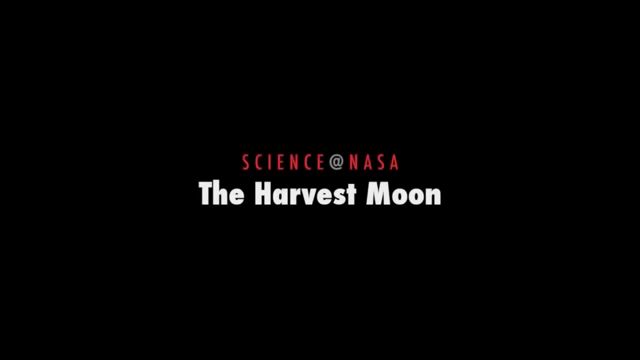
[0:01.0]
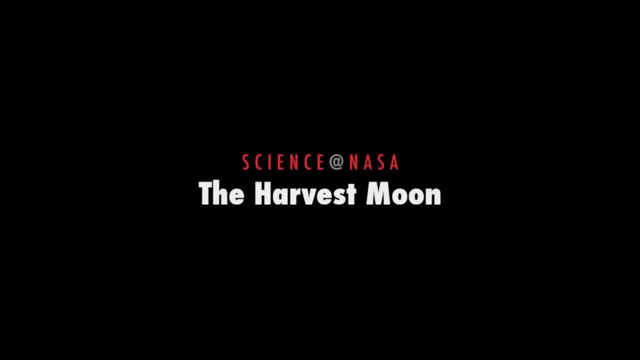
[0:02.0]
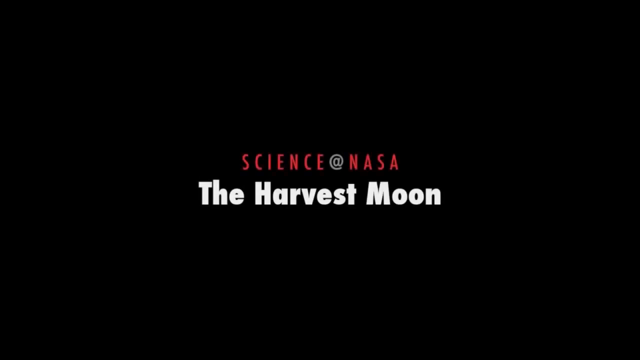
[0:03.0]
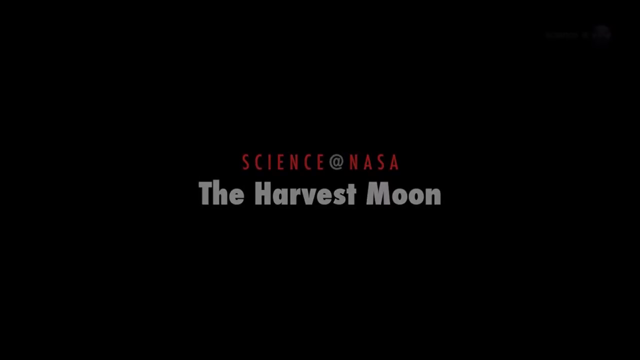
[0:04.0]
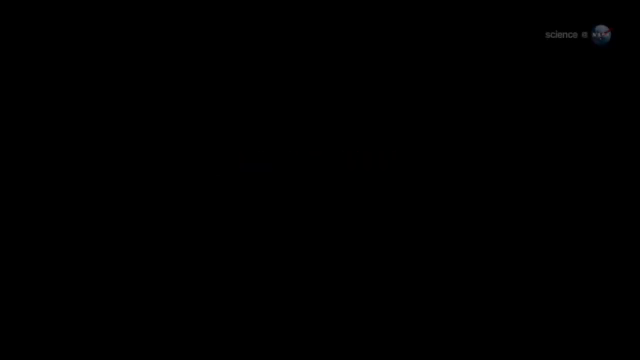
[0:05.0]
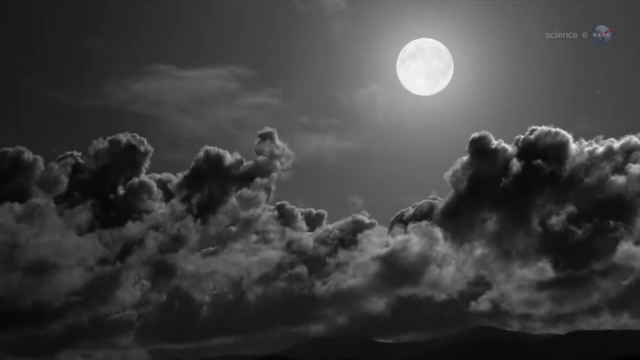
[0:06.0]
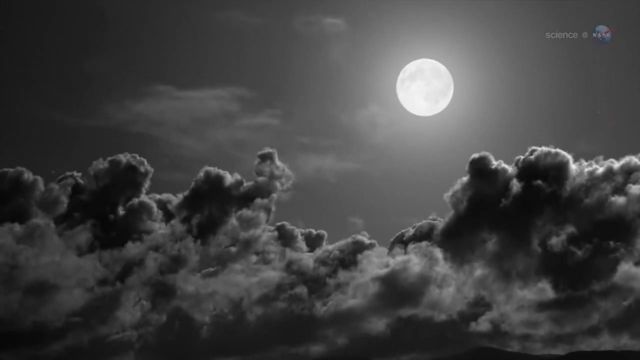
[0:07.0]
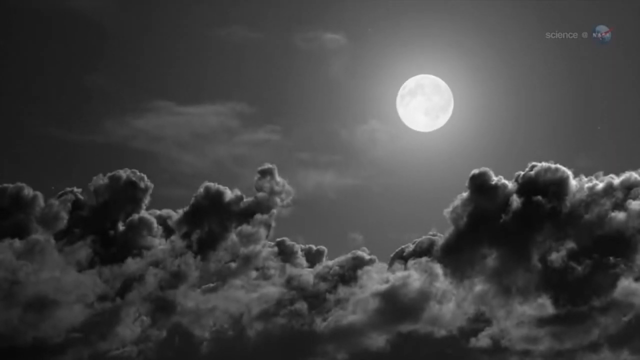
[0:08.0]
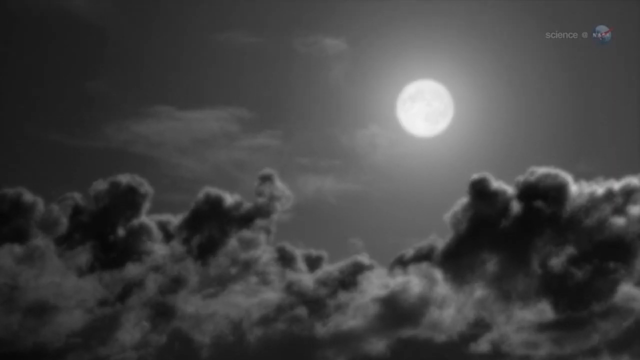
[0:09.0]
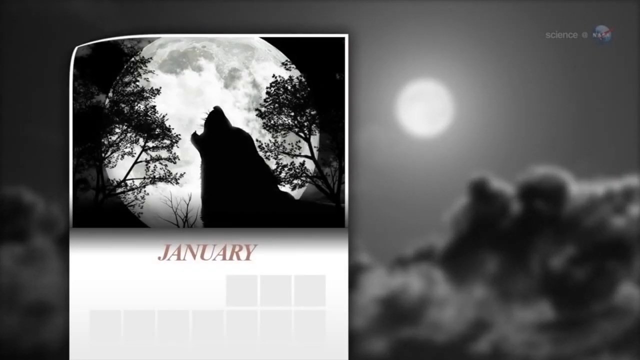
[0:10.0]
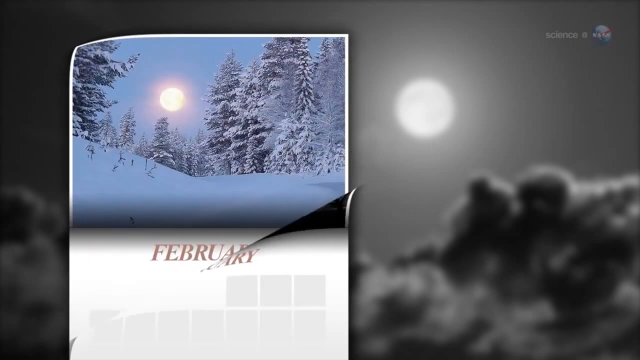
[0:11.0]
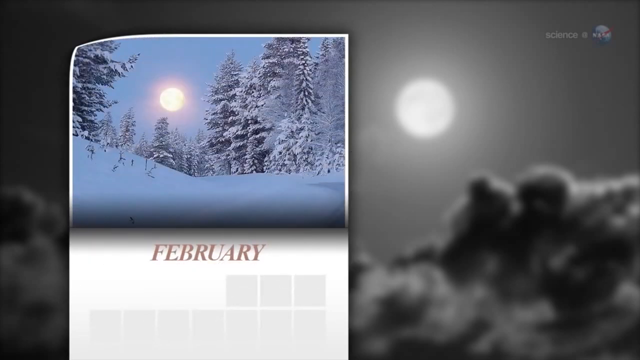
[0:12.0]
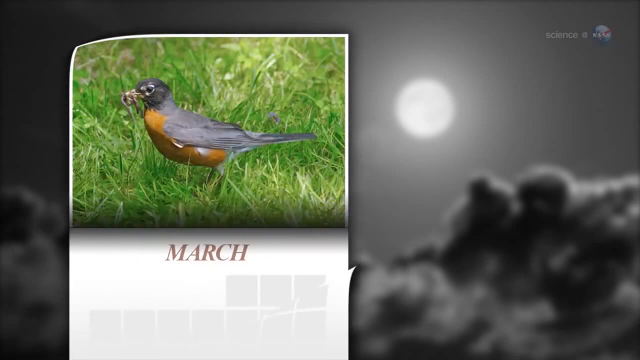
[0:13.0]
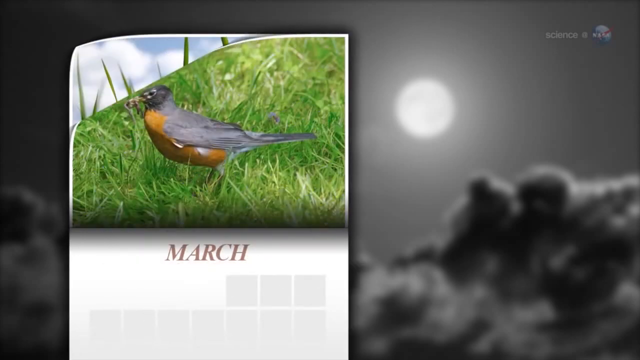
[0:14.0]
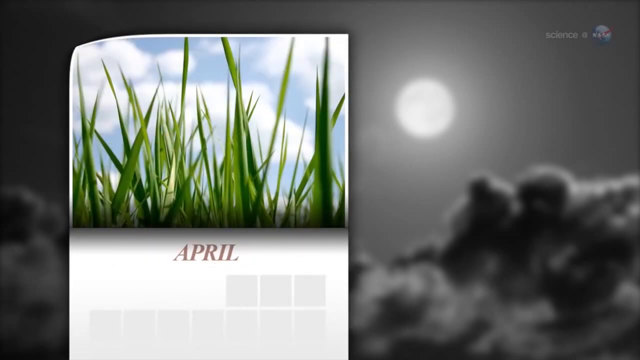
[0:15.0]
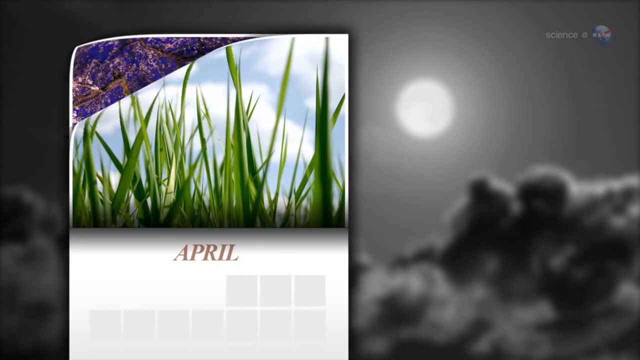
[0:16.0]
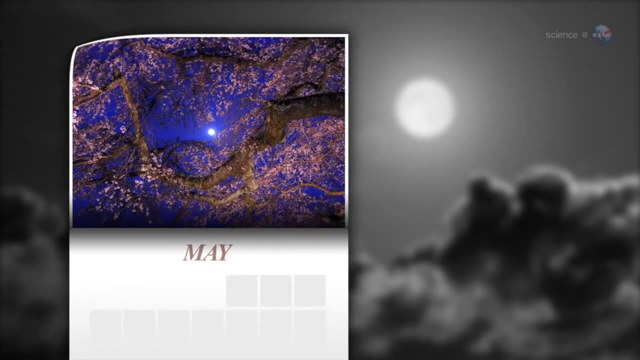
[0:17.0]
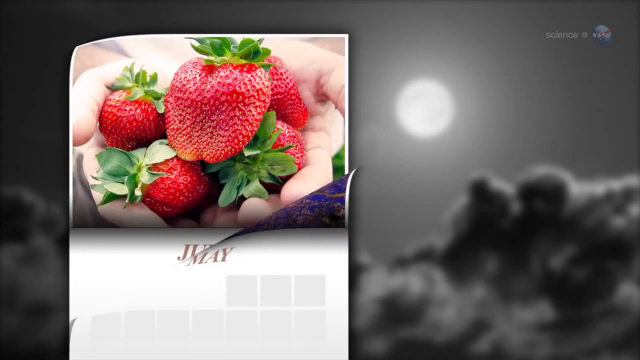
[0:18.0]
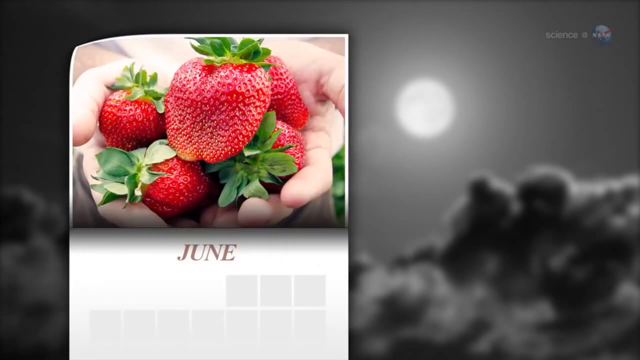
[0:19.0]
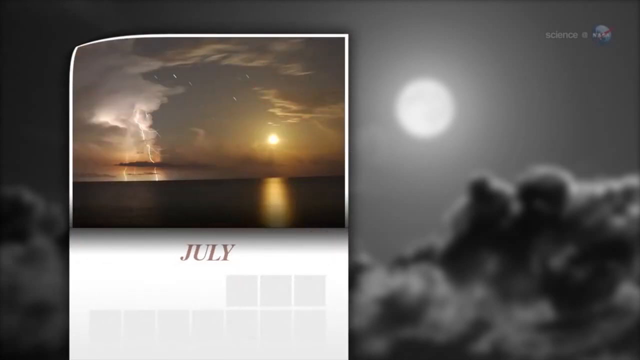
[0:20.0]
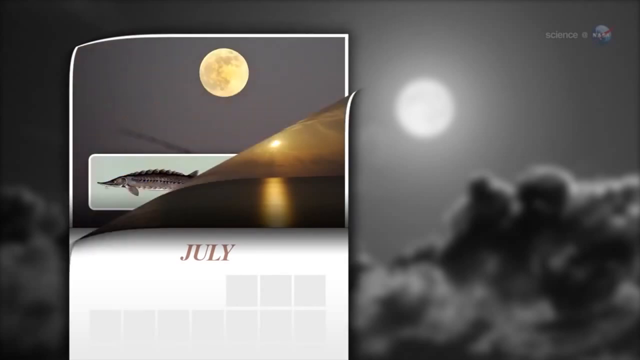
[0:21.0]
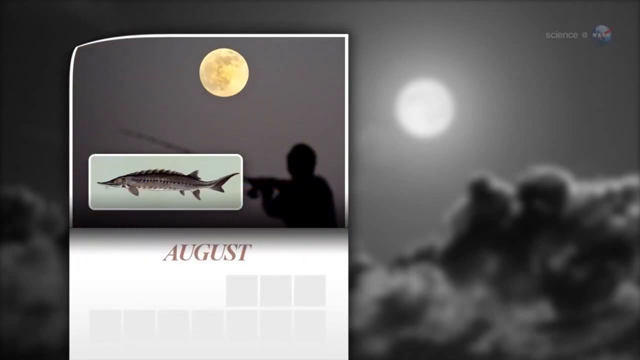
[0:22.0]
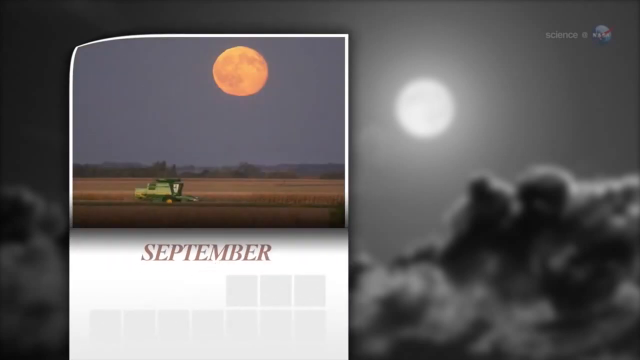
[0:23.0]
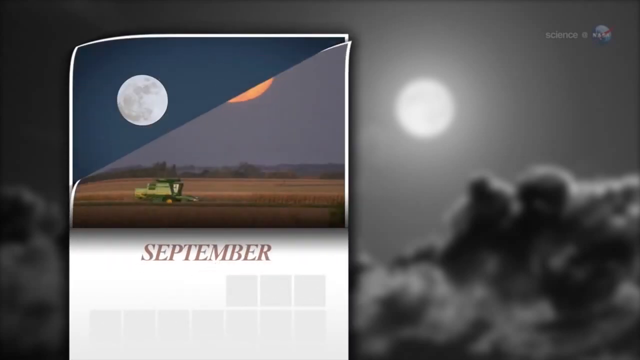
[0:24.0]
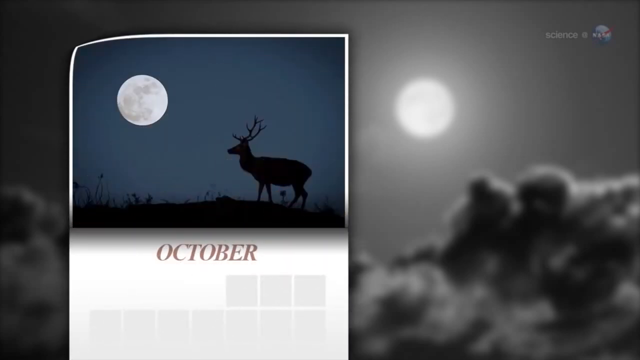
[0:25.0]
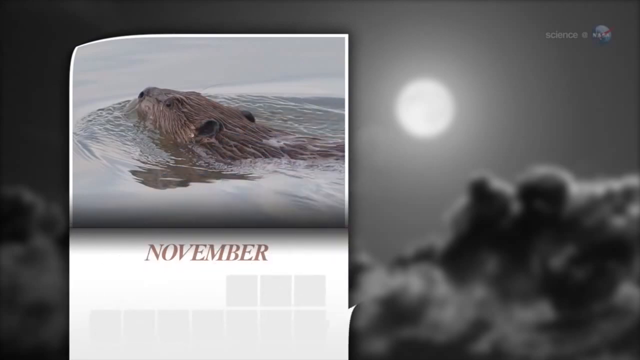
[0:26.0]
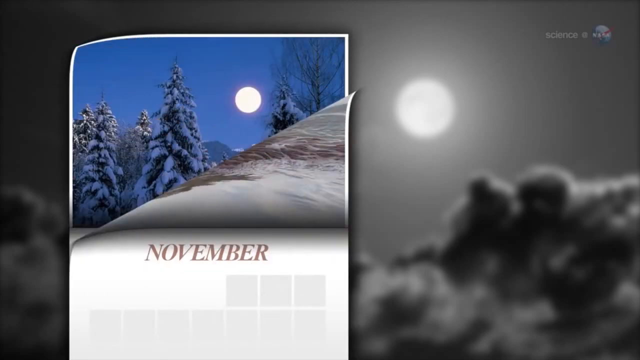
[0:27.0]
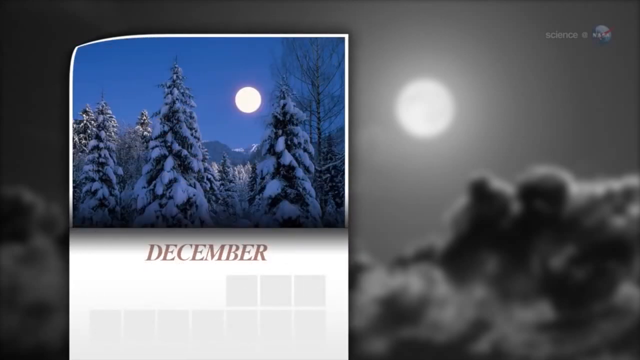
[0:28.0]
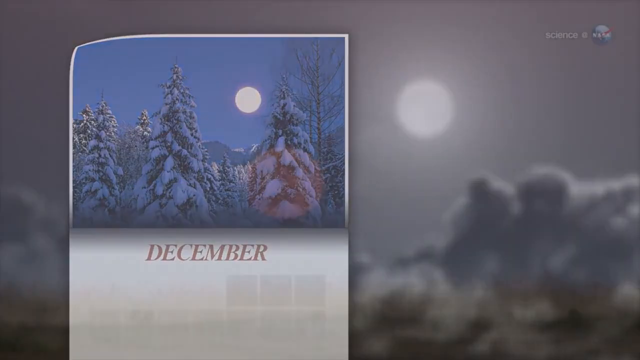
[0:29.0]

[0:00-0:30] The video opens with a title reading "Science at NASA," followed by white text reading "the Harvest Moon." It transitions to a black and white depiction of clouds with a full moon. A calendar appears reading "January" and flips down to "February," then "March," "April," "May," "June," "July," "August," "September," "October," "November," and finally "December," with a different picture for each month. The final image is a grassy plain with the moon on the horizon, which seems to have a reddish hue.